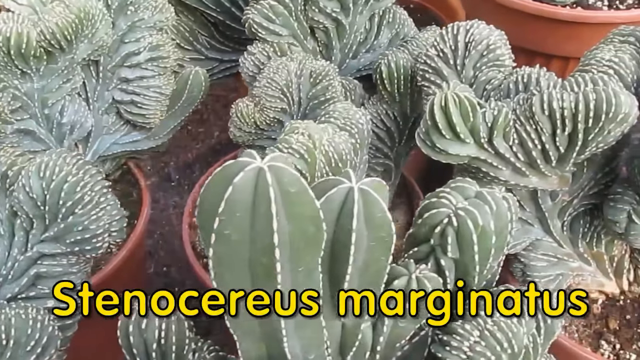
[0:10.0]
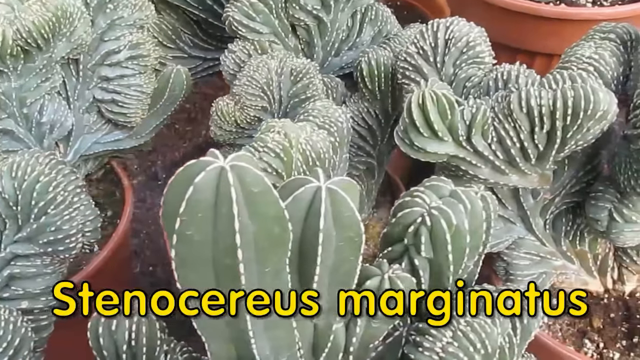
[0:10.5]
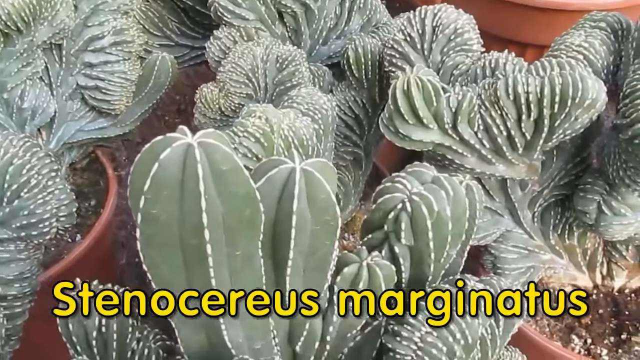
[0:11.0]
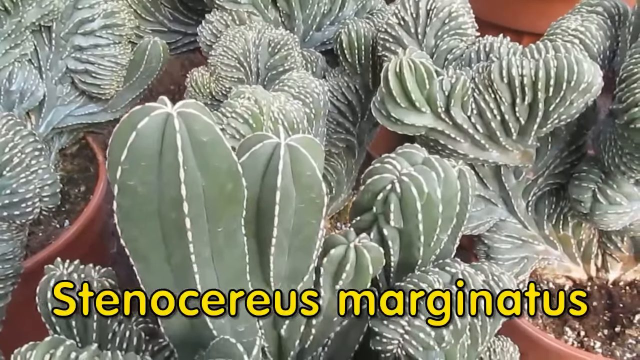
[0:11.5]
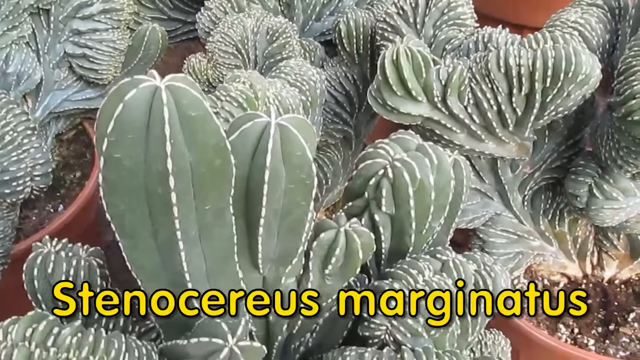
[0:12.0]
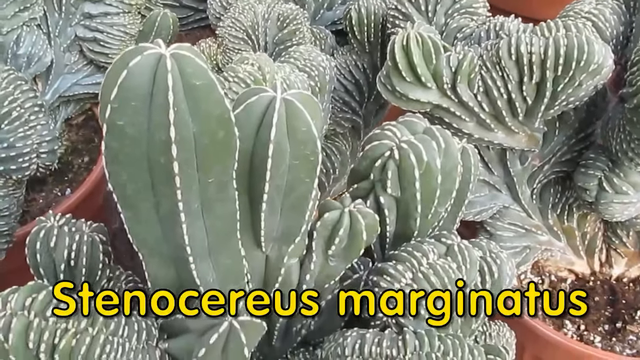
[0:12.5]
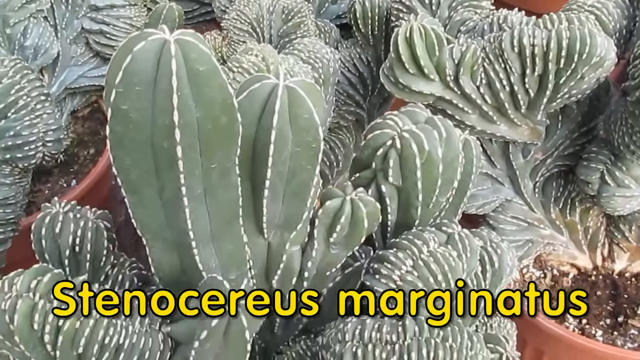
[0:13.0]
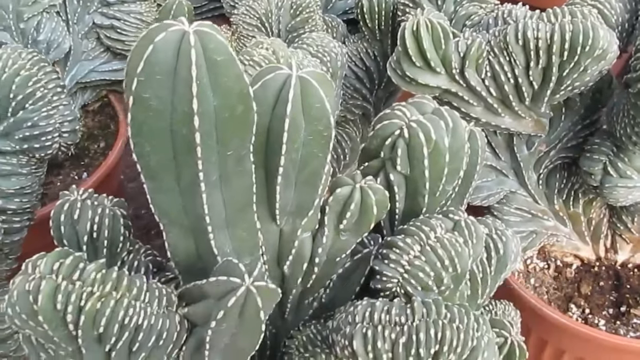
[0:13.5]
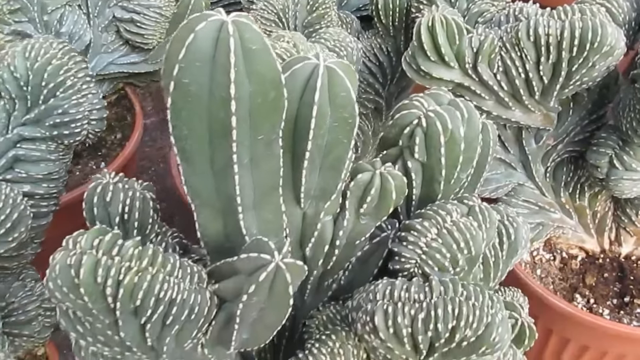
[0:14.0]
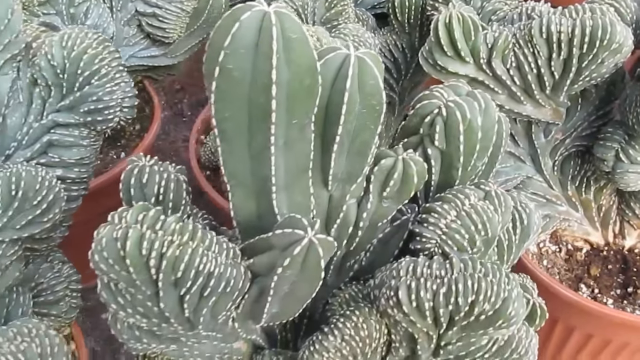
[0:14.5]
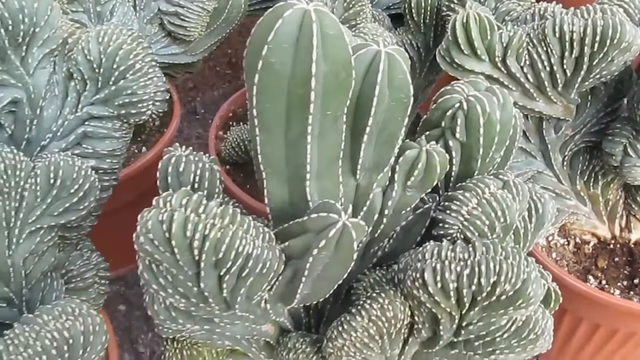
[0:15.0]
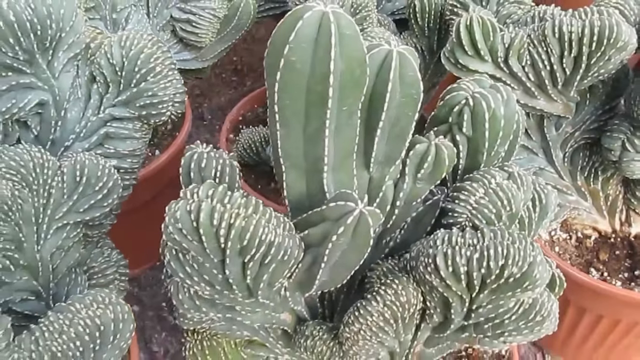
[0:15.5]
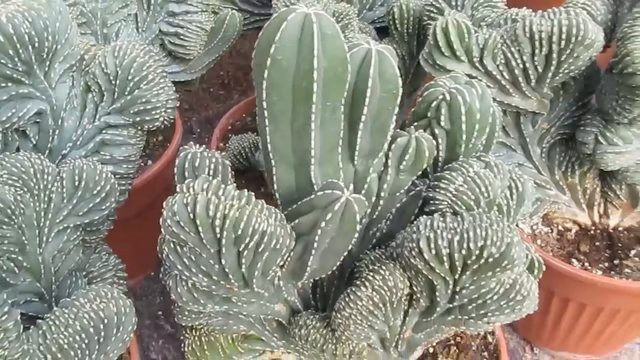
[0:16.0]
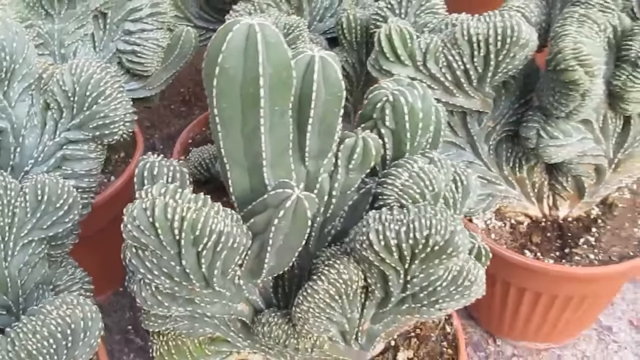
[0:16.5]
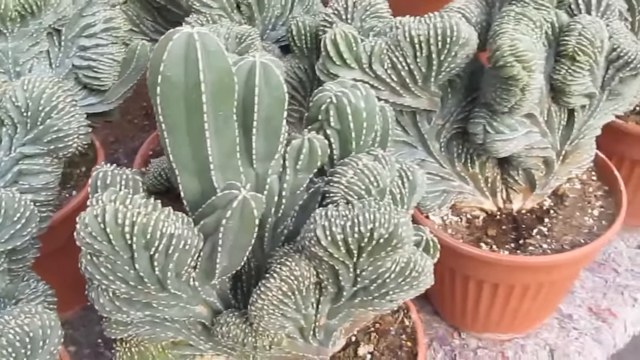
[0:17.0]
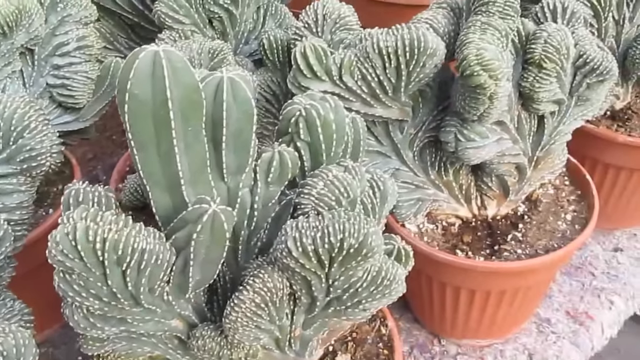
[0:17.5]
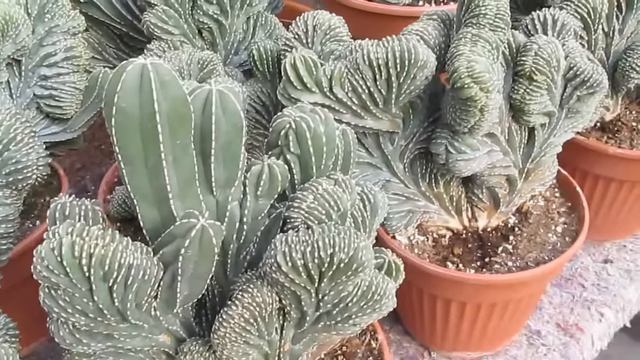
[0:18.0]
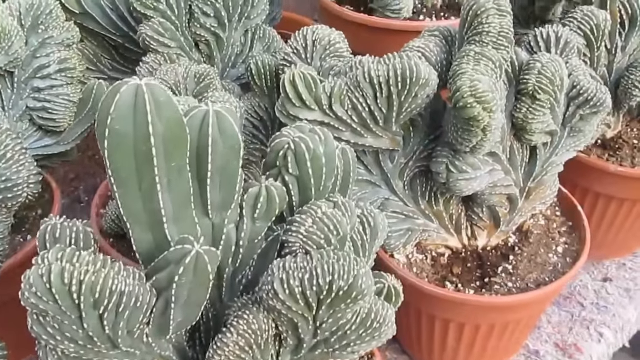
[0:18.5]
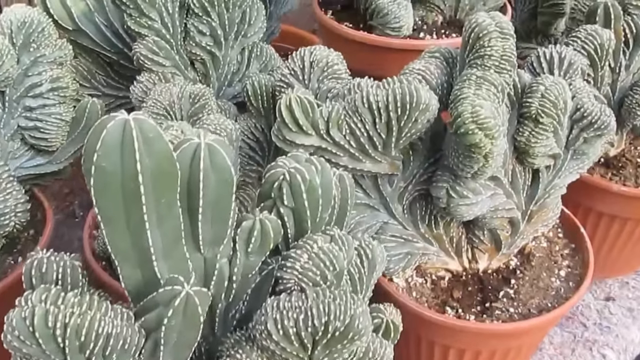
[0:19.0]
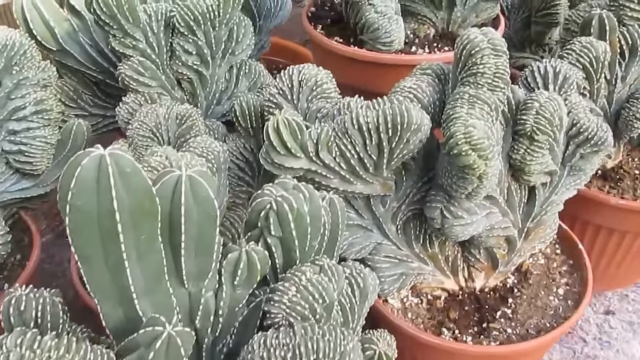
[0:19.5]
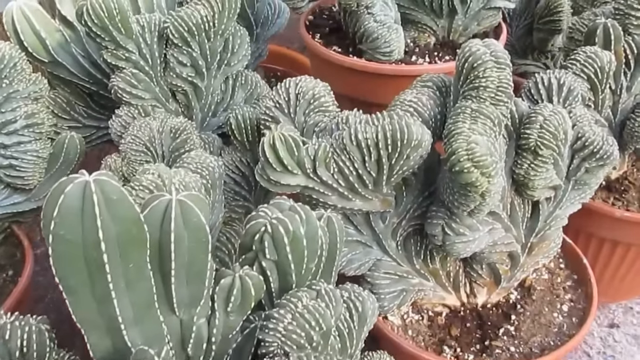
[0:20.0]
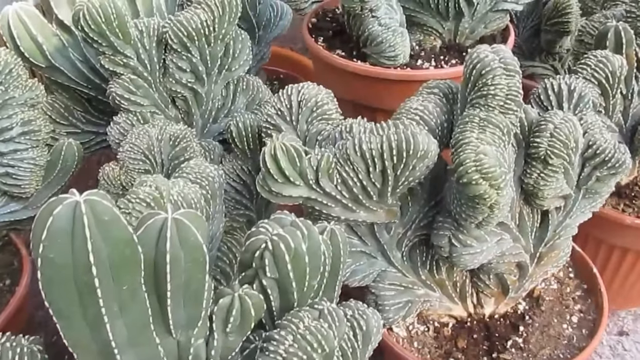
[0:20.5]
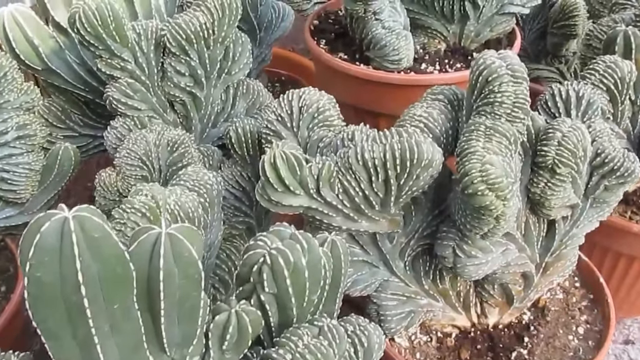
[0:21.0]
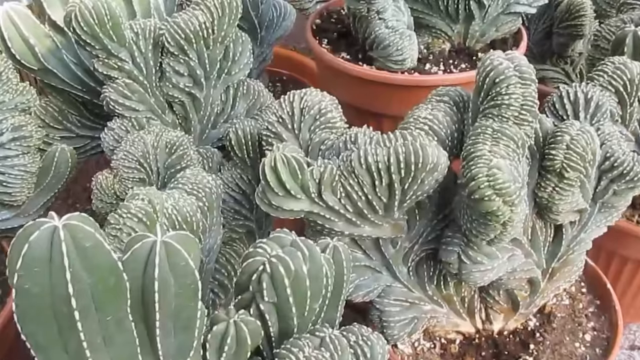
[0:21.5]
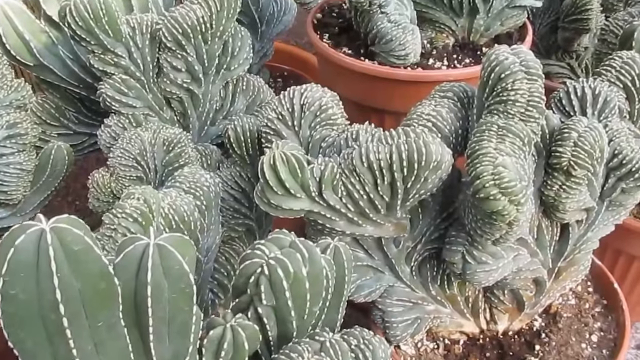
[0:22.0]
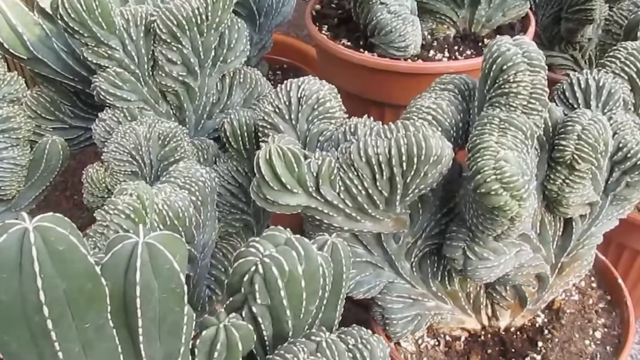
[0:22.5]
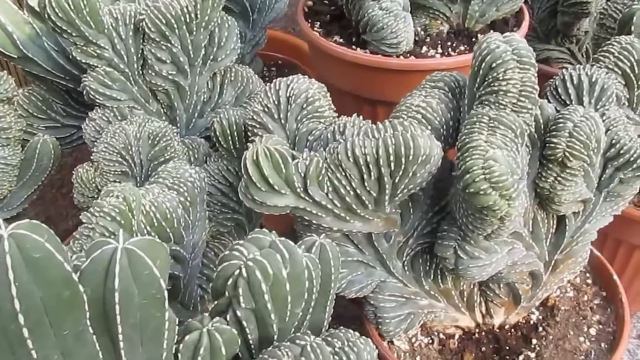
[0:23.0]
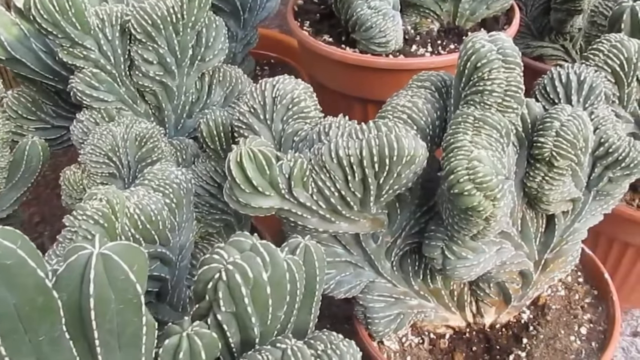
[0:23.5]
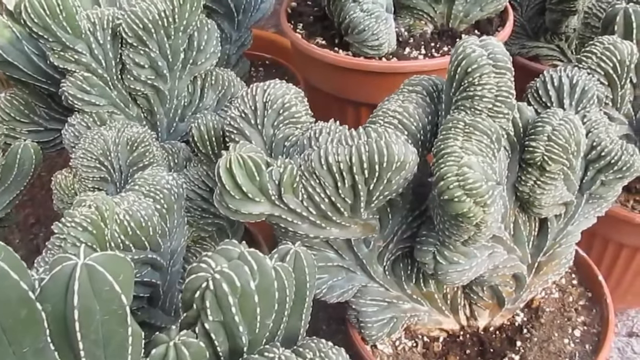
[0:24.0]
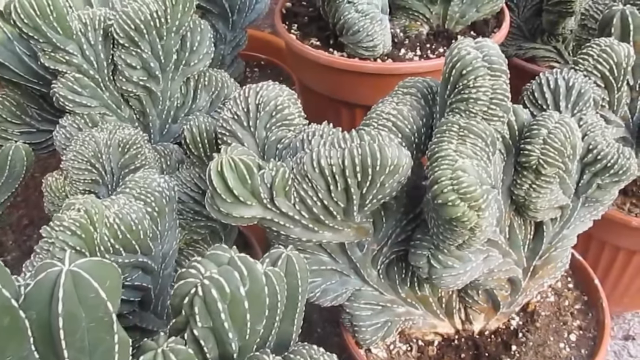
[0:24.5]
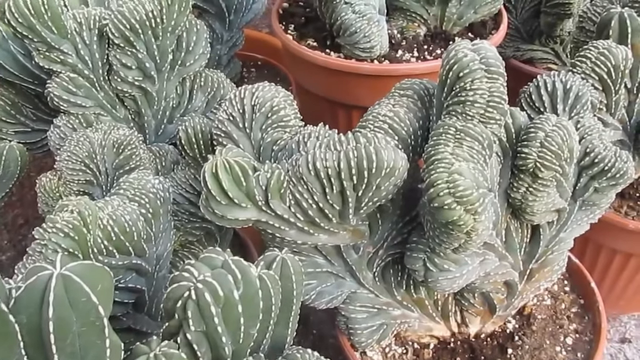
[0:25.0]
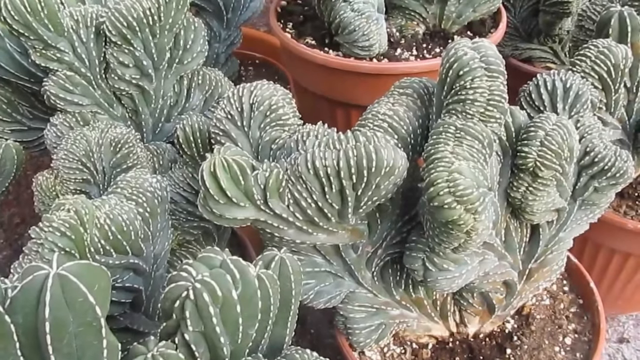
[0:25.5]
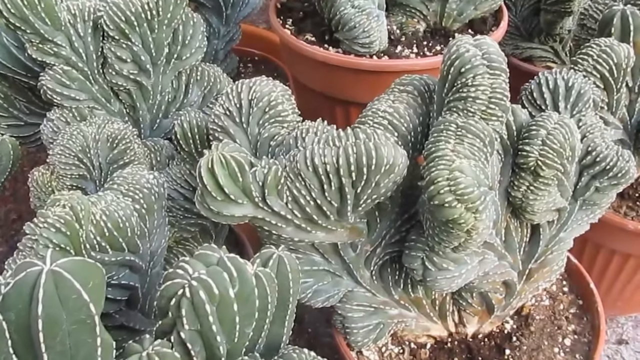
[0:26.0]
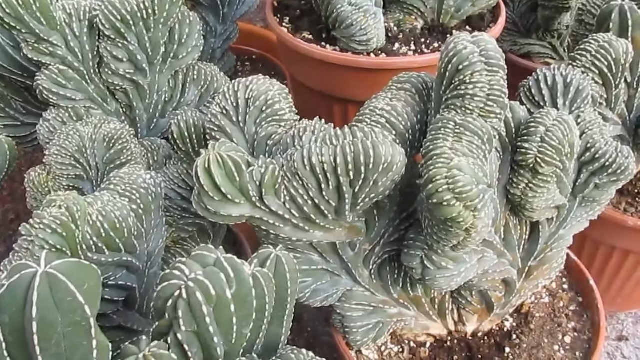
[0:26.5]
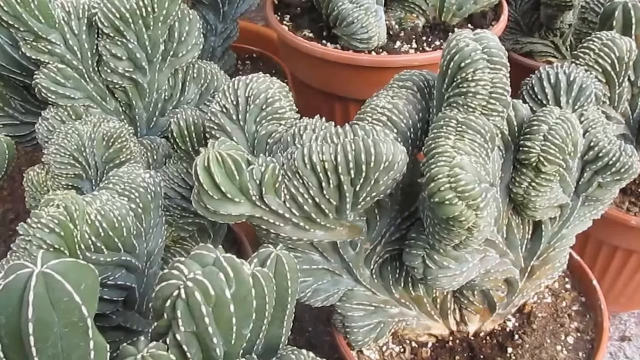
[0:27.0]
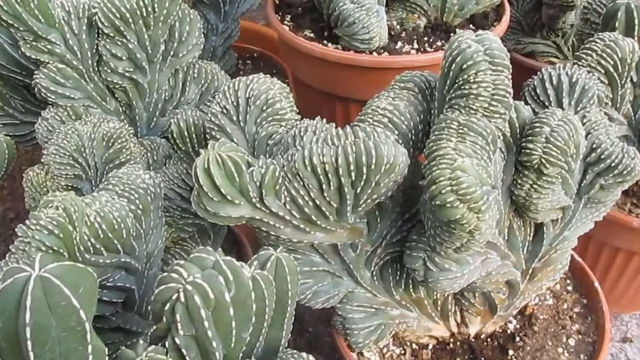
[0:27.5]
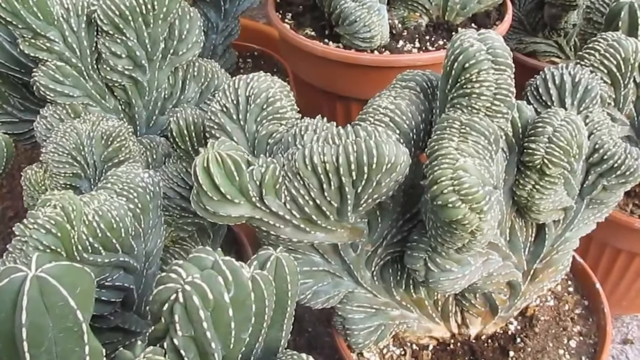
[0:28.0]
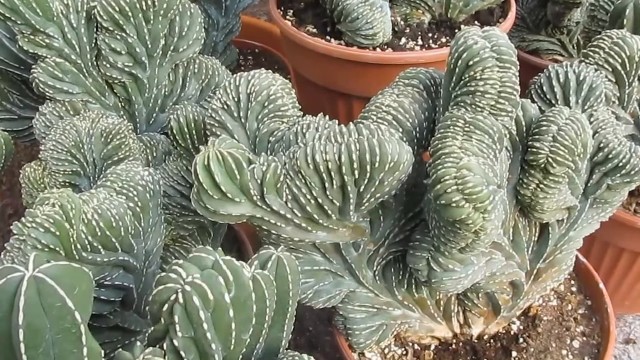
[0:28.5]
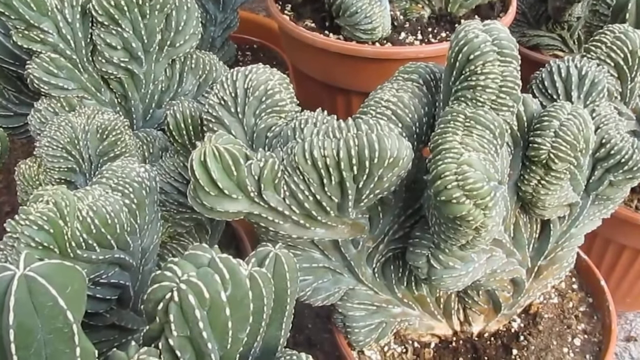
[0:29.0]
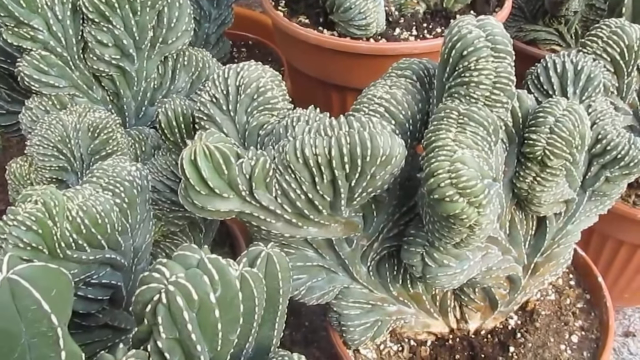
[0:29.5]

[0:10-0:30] The caption continues at the bottom of the video as the person recording goes through the different cactus plants; this is possibly someone selling the plants or a garden center. The tips of the cactus ribs have small white lines on them. The brown pots have some lines going down the center. Some cactuses are bigger than others, and some have more ribs than others. The soil they are planted in looks a little dry and has some sort of fertilizer beads throughout. There is not much space between the pots, and it looks pretty crowded. The pots are on what looks to be a dirt path.